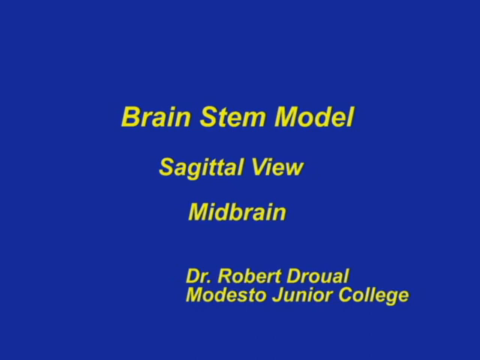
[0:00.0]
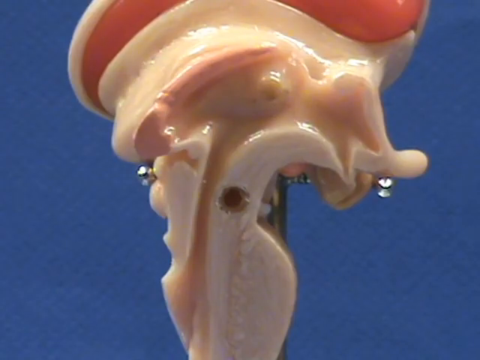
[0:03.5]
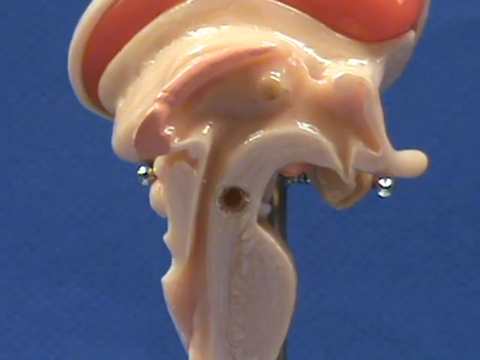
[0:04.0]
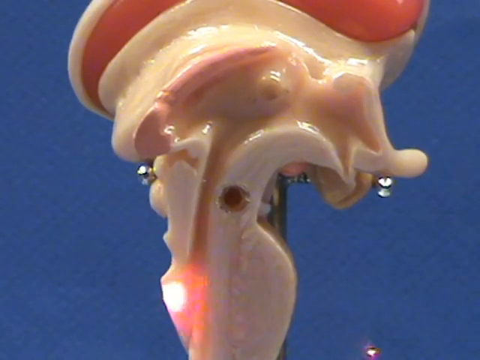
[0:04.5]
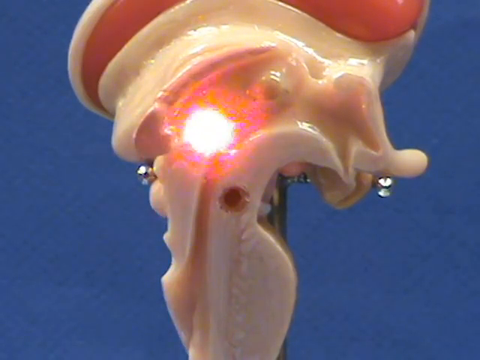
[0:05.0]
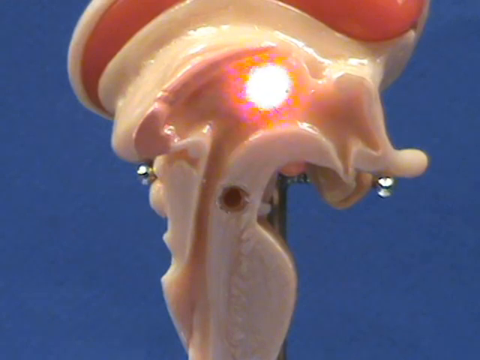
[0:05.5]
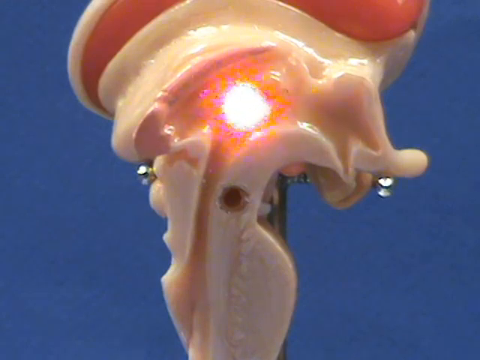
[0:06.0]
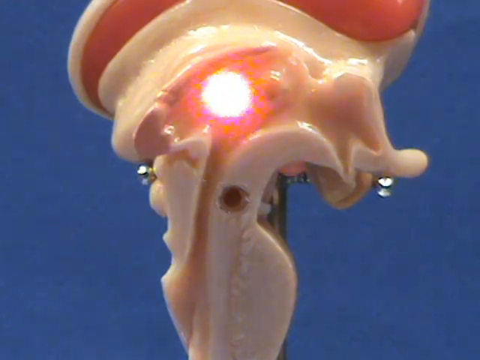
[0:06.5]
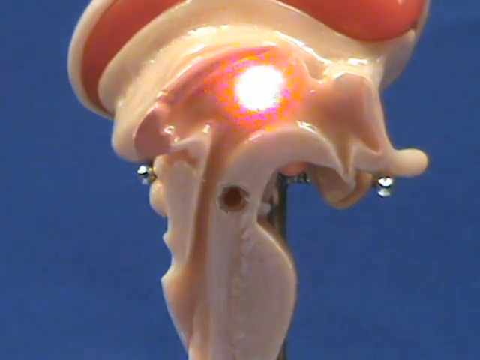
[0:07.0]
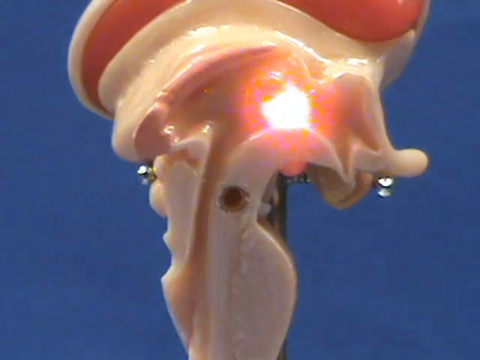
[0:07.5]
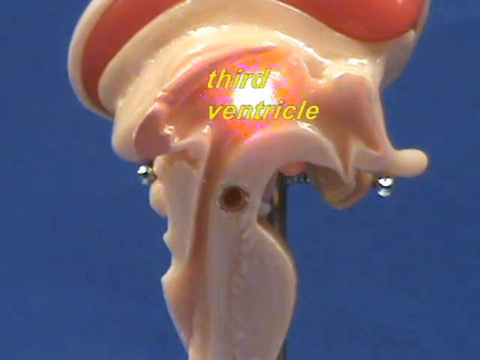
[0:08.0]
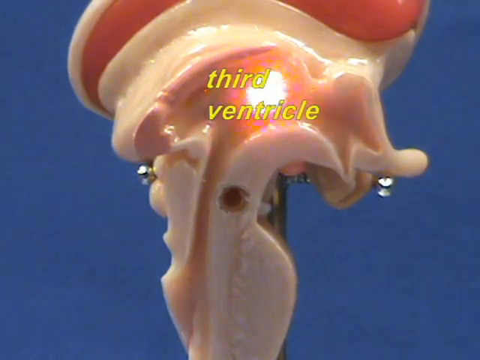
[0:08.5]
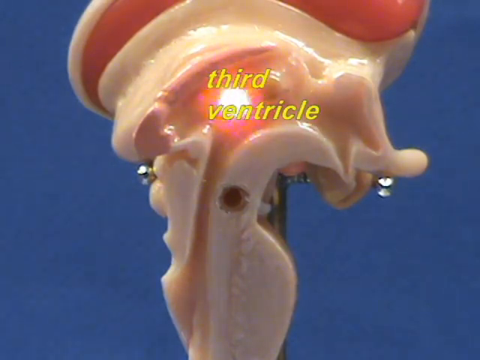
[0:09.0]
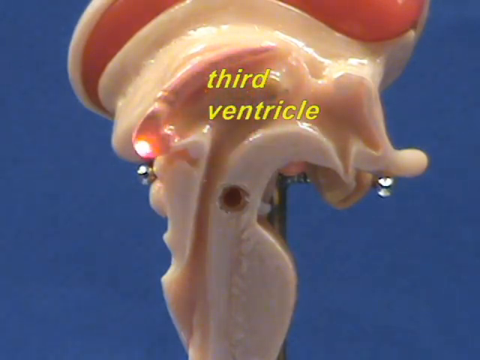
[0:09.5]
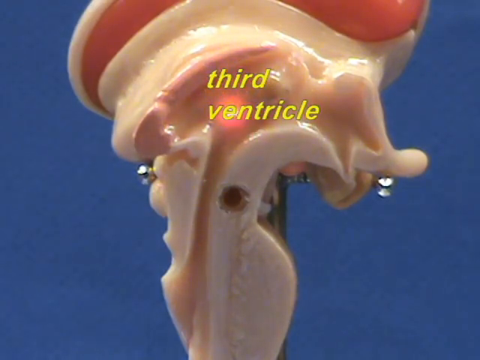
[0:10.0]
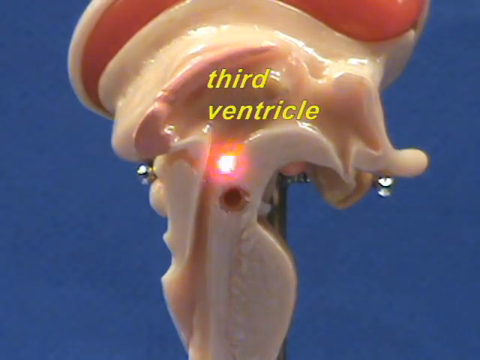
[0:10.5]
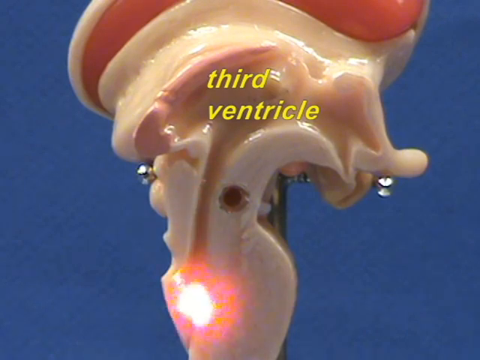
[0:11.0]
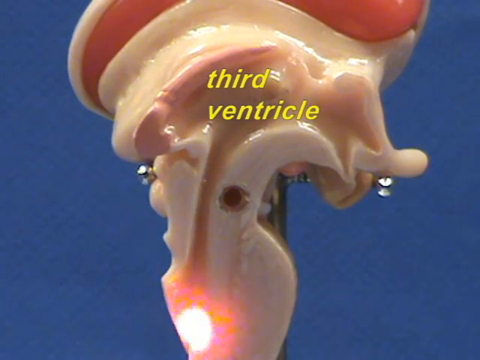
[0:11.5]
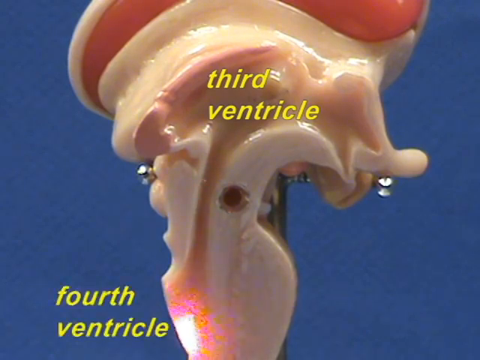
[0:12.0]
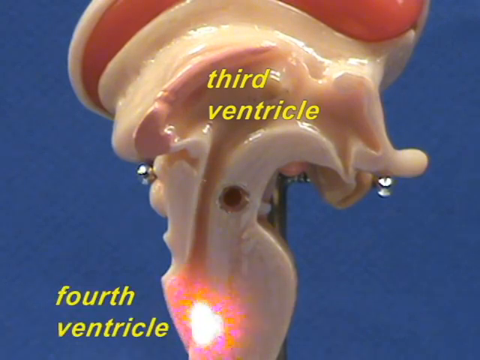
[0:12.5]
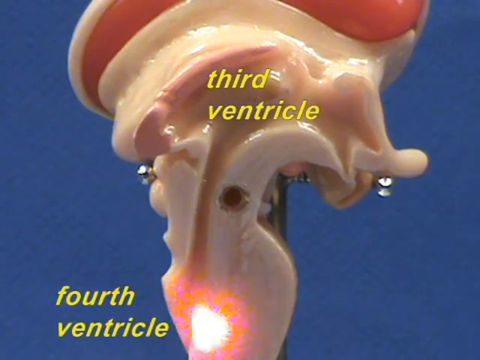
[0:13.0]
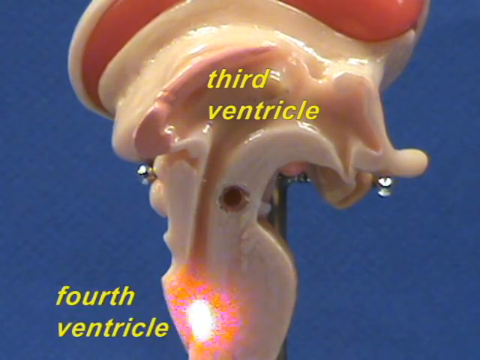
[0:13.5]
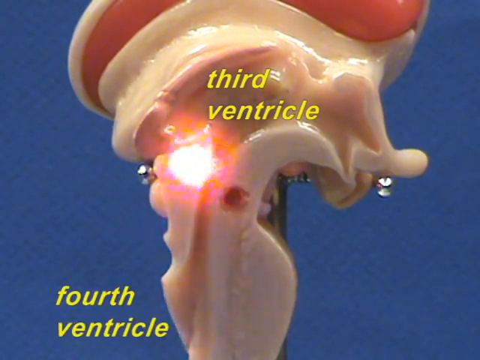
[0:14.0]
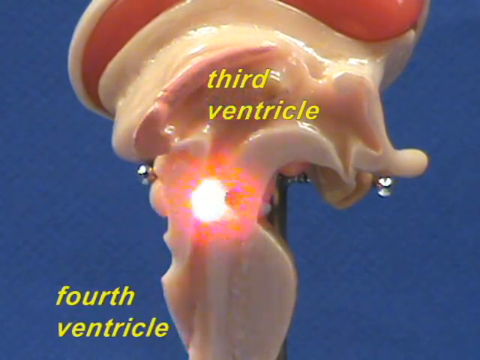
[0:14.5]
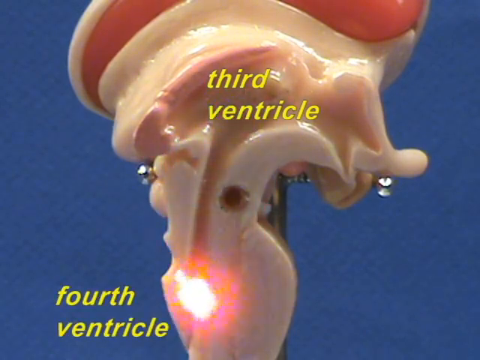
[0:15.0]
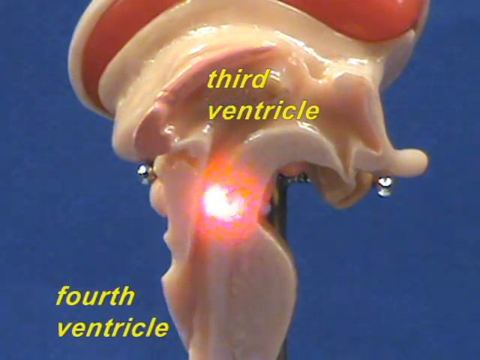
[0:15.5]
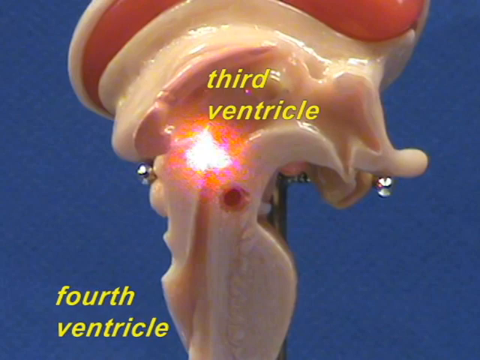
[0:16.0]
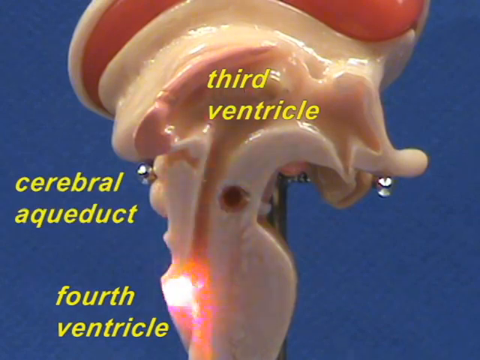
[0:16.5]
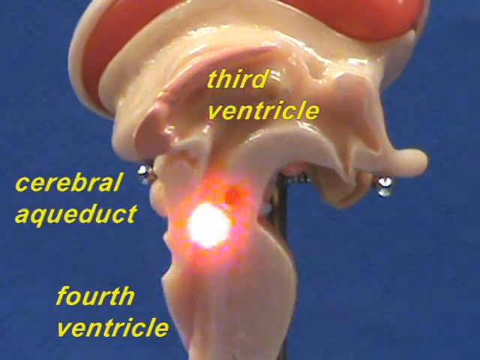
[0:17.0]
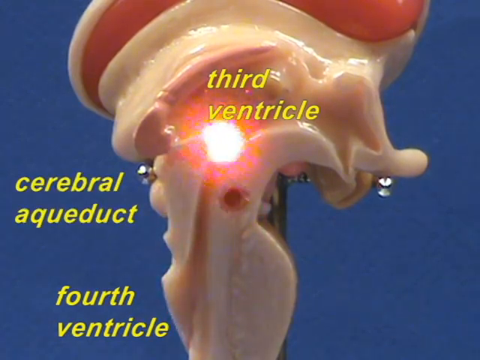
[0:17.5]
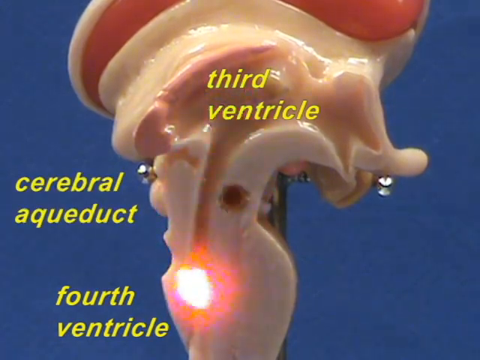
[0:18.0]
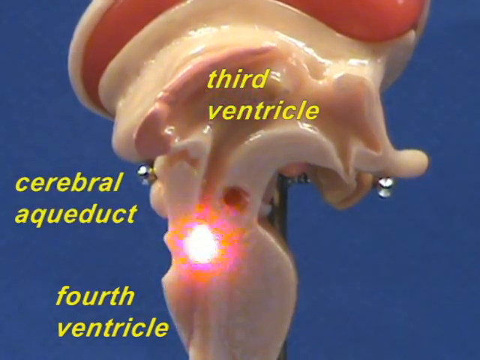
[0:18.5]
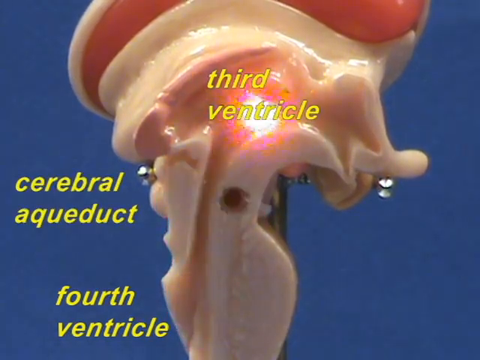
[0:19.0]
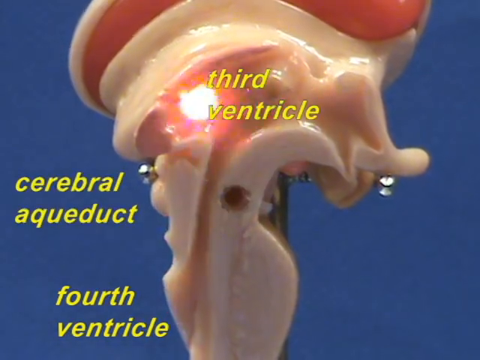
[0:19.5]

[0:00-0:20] The video opens on an all-blue background with yellow lettering that almost seems to have a black shadow behind it. The text reads "brainstem model, sagittal view, midbrain, Dr. Robert Drewell, Modesto Junior College"; "brainstem" is in the largest font, and the text gets smaller going down. An image of a body part then appears. It looks to be made of possibly plastic or rubber, and some metal parts are visible, apparently holding it up; it looks like something used for teaching. Someone appears to have a laser pen light and moves it all around the object, possibly to point out the different parts. The object is a flesh color. Yellow text pops up reading "third ventricle". The light moves up and down, and there is a carved-out, hollowed area in the object. More text pops up on the bottom side reading "fourth ventricle", the small light moves there, and then "cerebral aqueduct" appears.